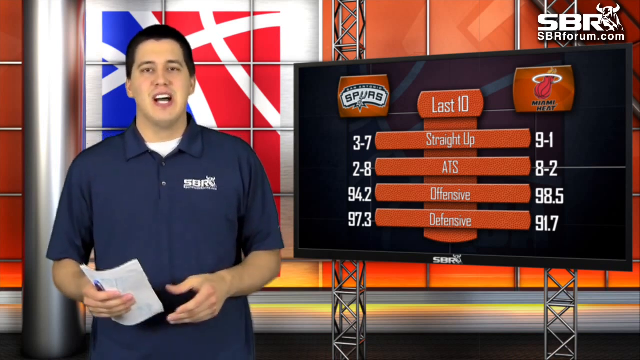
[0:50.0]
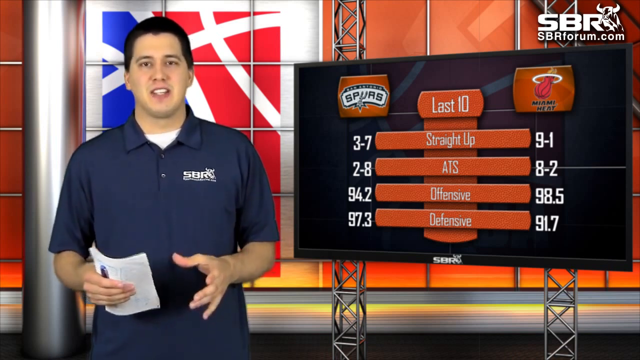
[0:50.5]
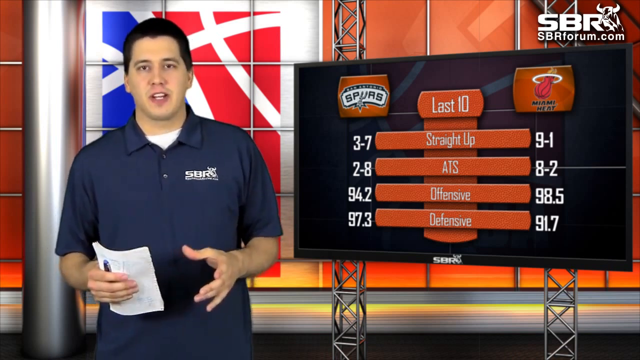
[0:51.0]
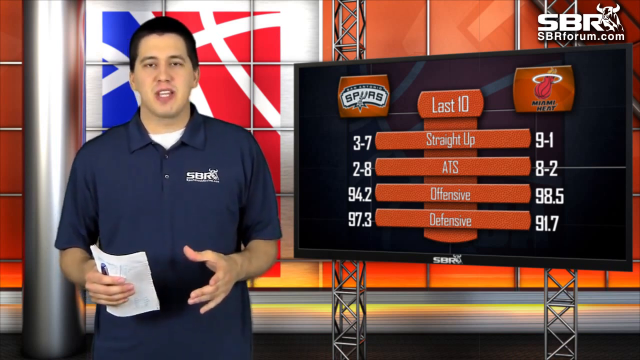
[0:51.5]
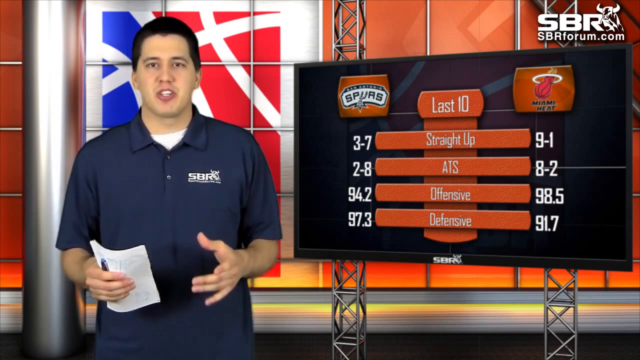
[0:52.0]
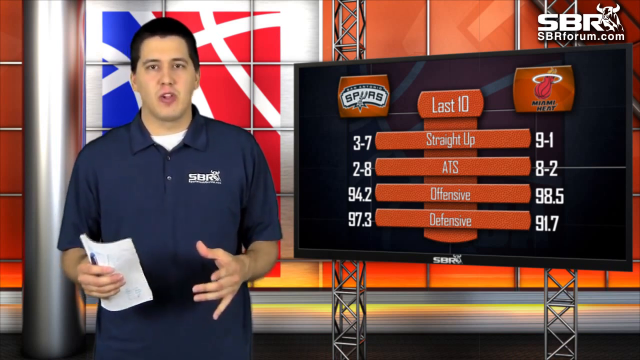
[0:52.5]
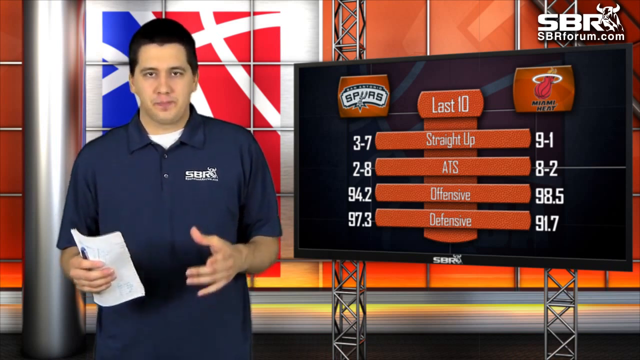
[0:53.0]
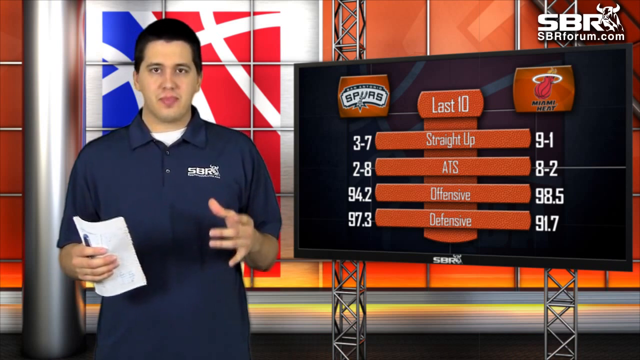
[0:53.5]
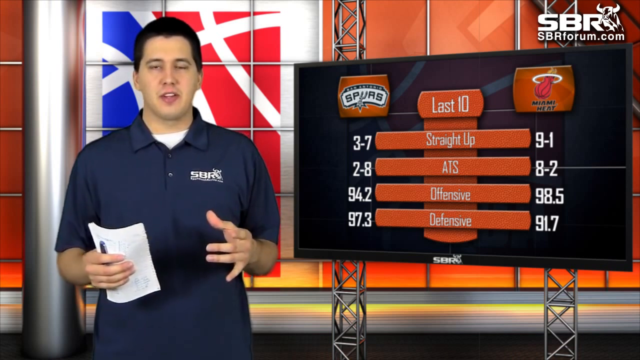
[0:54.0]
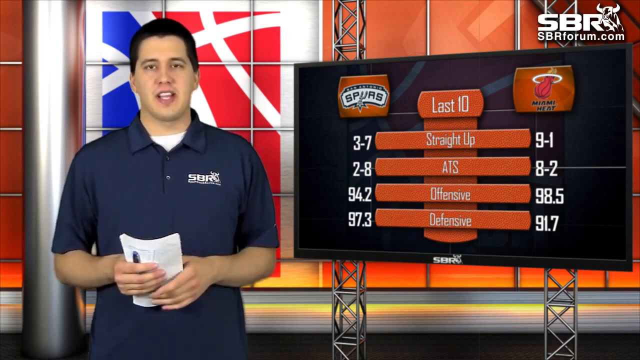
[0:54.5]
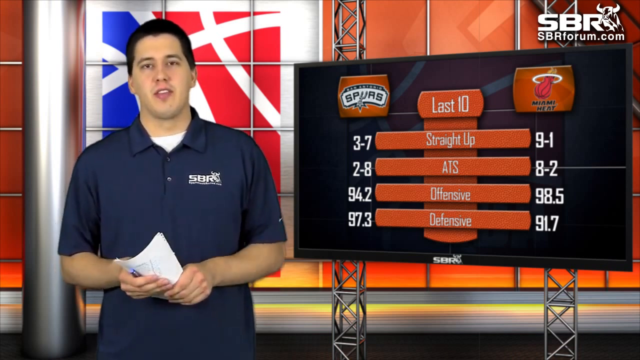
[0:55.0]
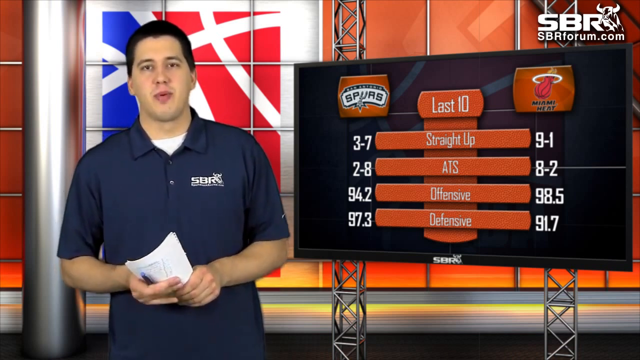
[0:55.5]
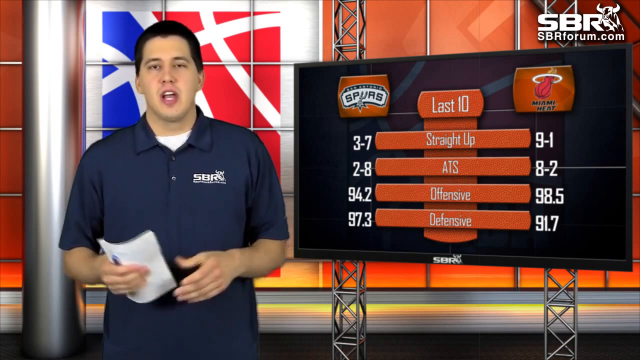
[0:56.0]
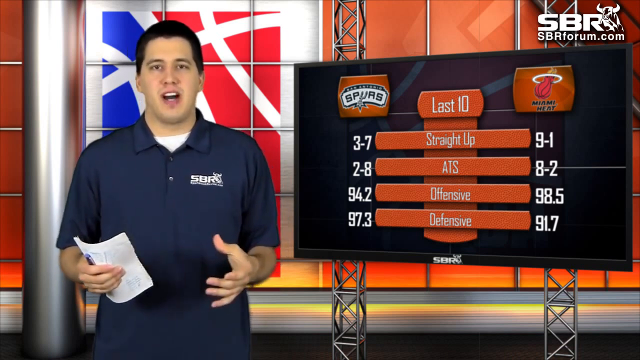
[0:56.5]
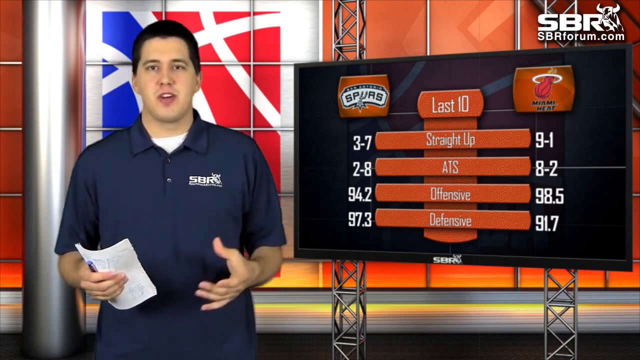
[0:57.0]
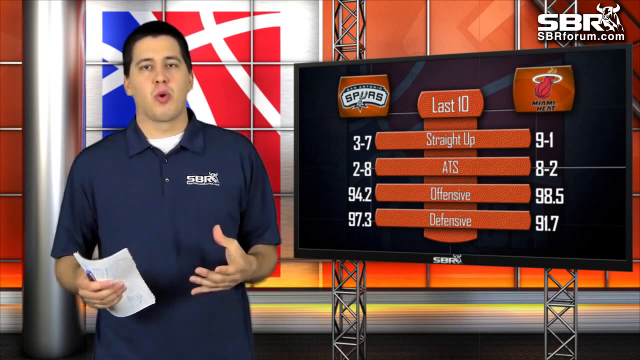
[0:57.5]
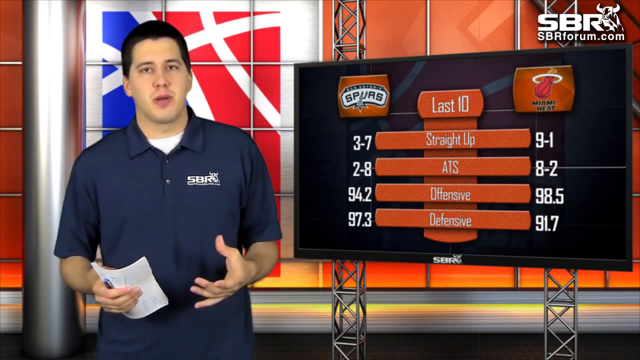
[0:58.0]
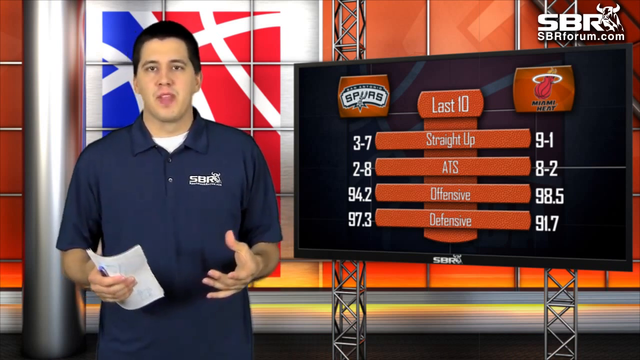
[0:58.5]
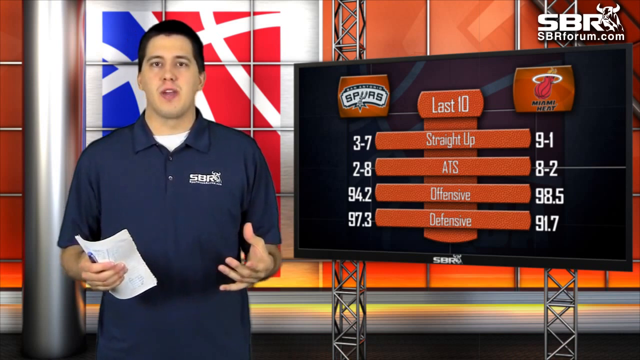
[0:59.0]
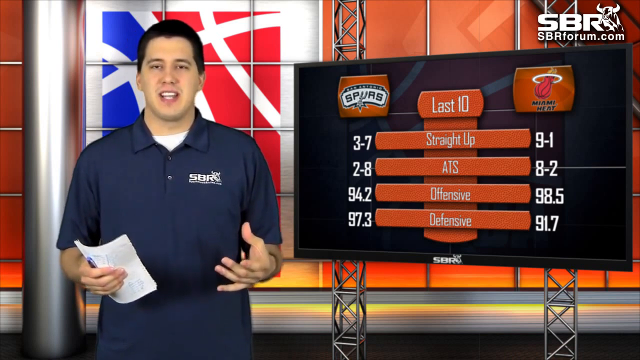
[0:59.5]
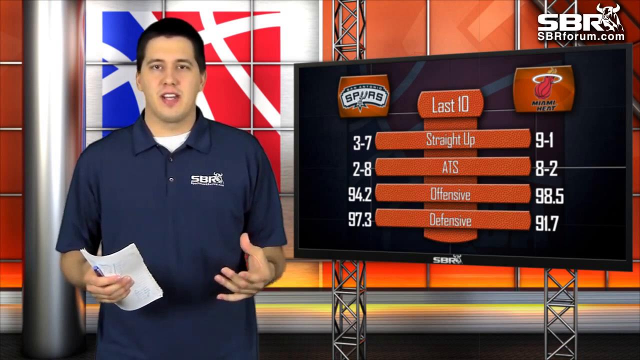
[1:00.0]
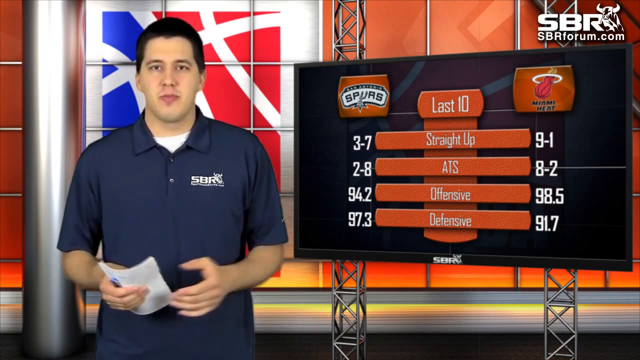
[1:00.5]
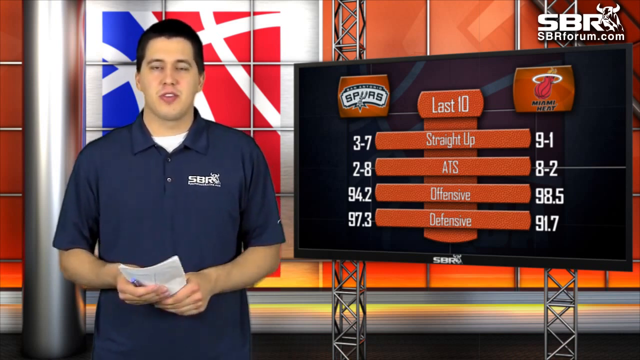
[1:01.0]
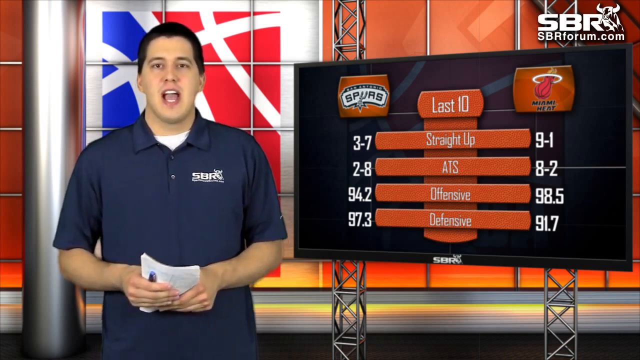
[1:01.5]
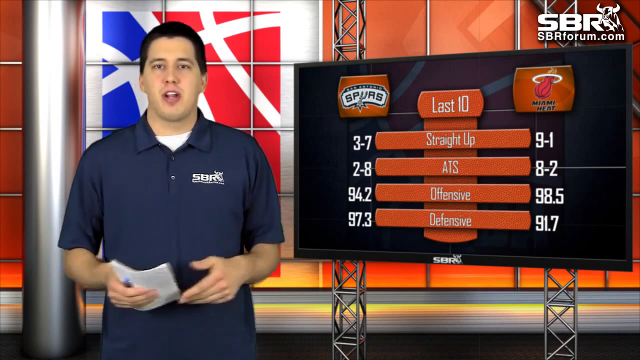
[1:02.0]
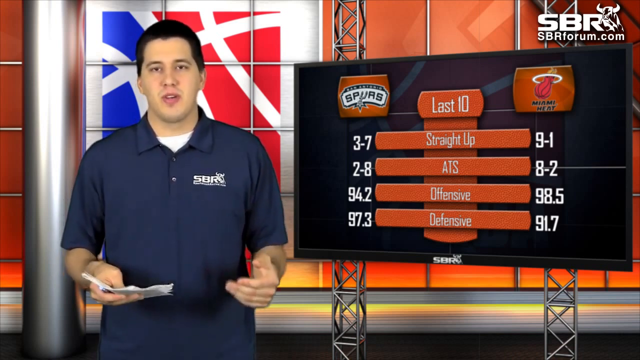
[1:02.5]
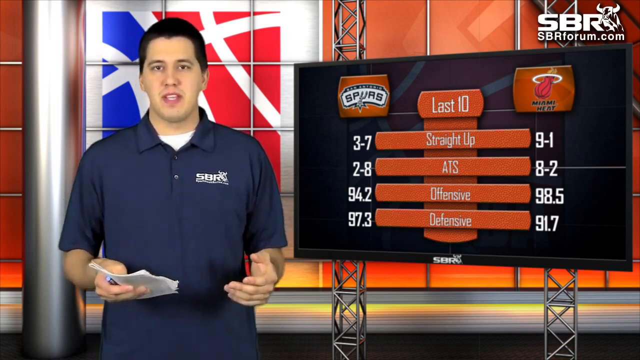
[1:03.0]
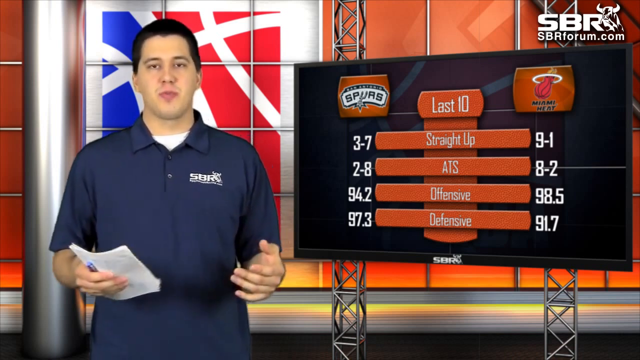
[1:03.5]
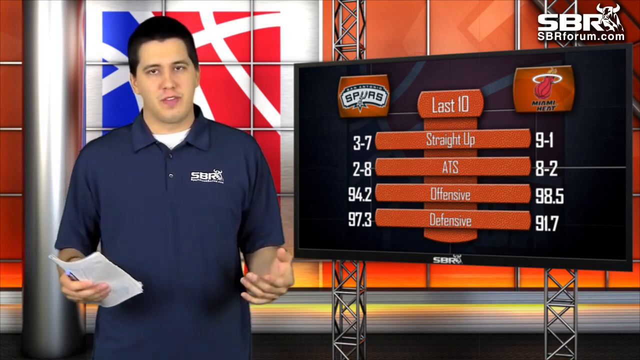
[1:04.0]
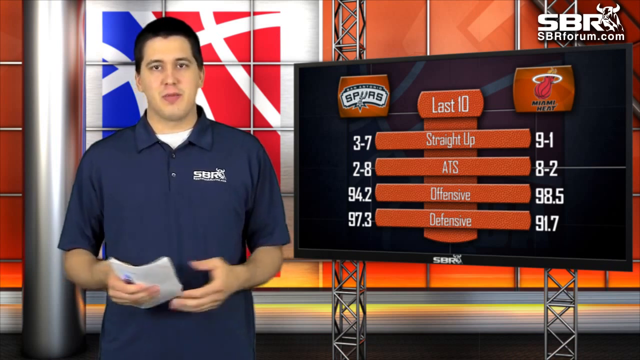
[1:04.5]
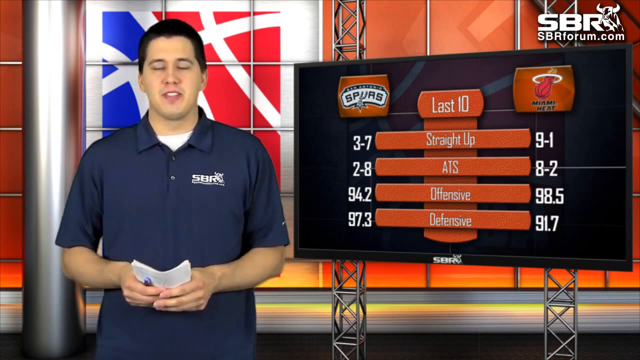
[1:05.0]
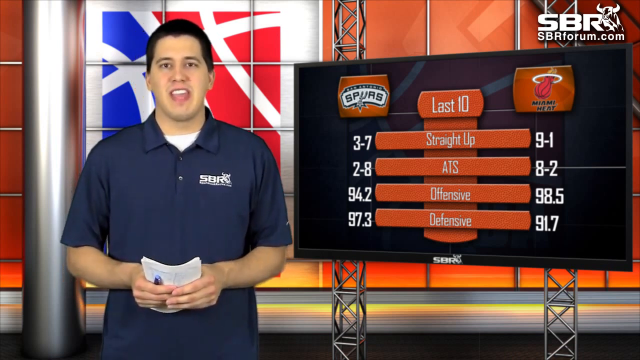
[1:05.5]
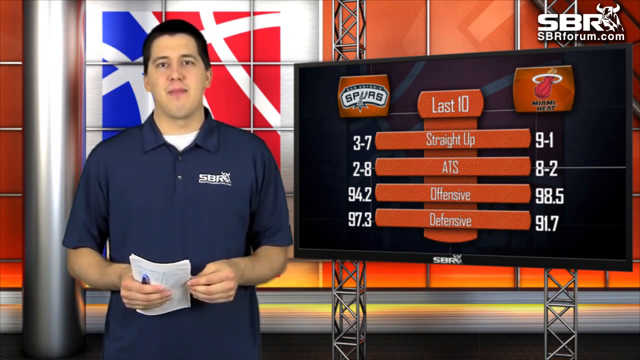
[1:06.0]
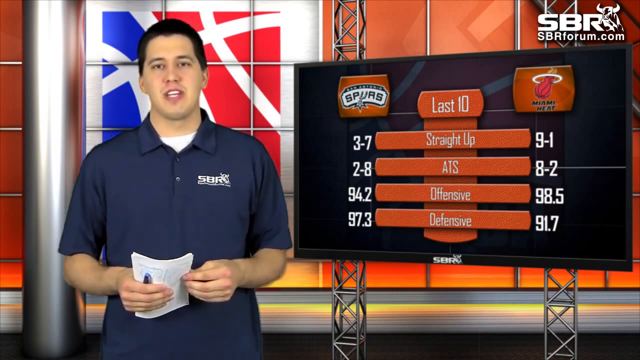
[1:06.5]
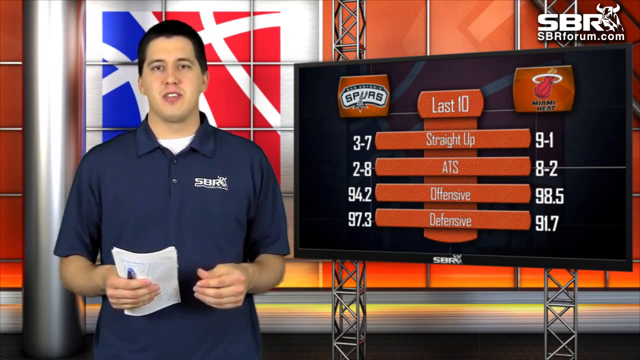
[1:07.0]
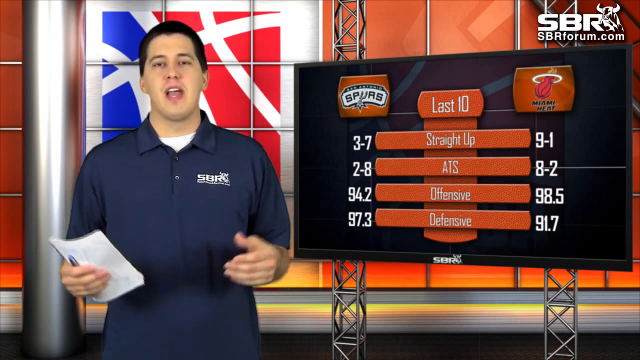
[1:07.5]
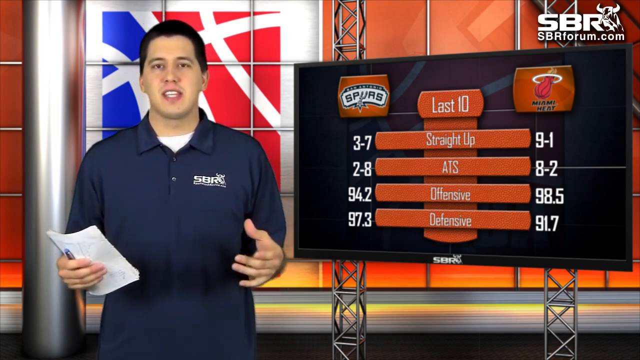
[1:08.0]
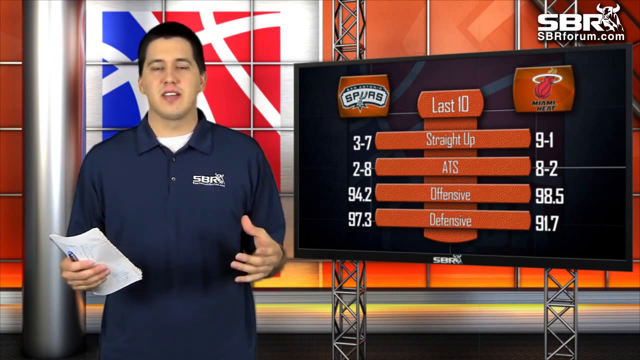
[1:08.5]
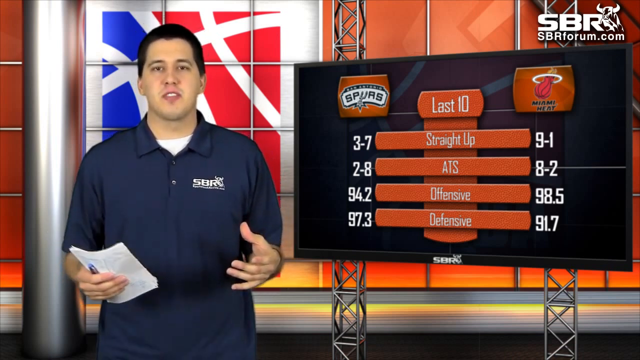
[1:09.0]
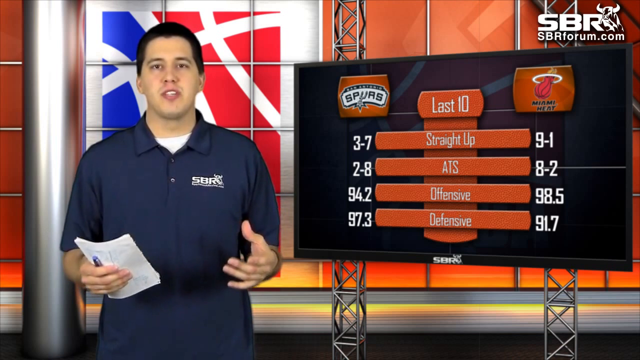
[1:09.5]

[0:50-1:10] A man on the left side of the screen, wearing a dark blue shirt with a white t-shirt, talks directly to the audience. On the right side of the screen, the last 10 games between the San Antonio Spurs and the Miami Heat are compared, with straight up, ATS, offensive and defensive figures for the two teams, in white text over an orange background with four orange horizontal stripes. On the left side of the screen, a red basketball is right behind the man.